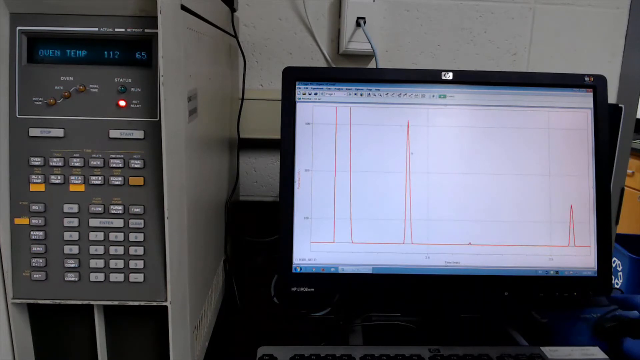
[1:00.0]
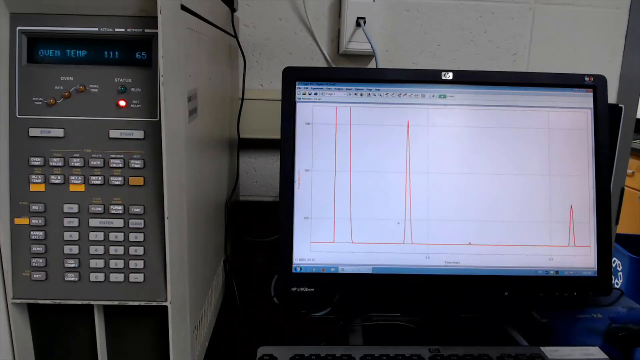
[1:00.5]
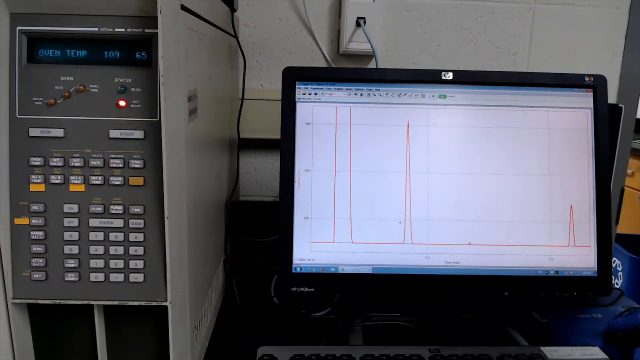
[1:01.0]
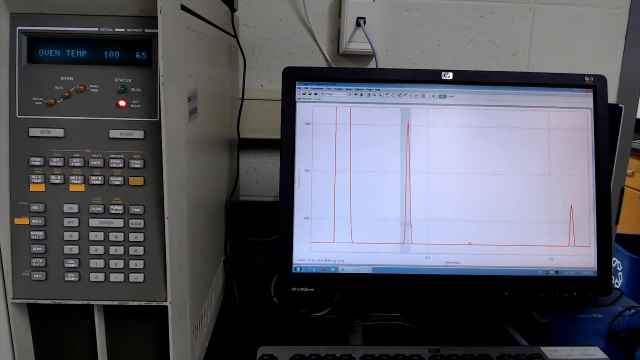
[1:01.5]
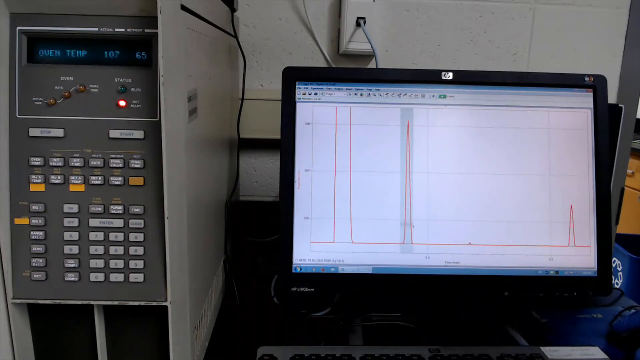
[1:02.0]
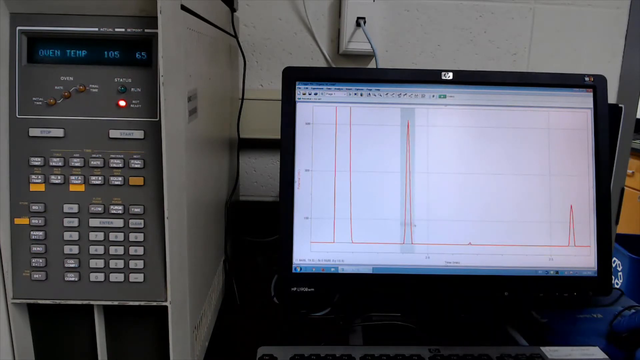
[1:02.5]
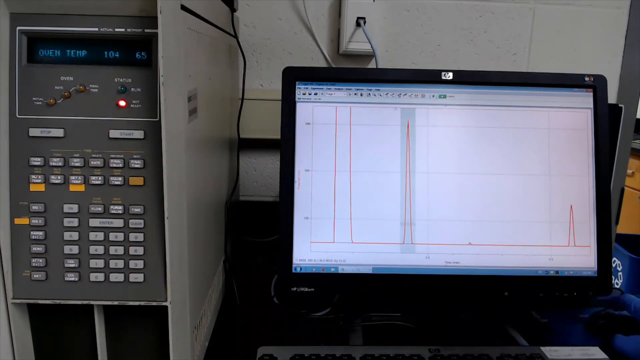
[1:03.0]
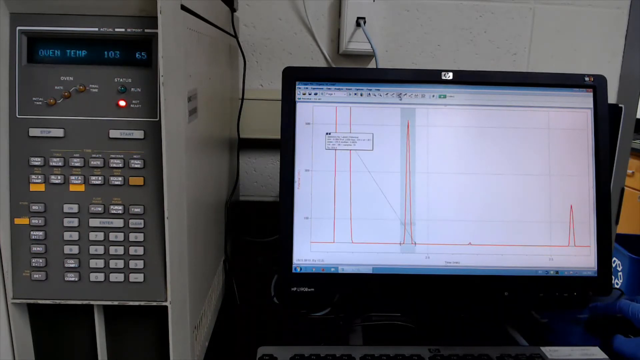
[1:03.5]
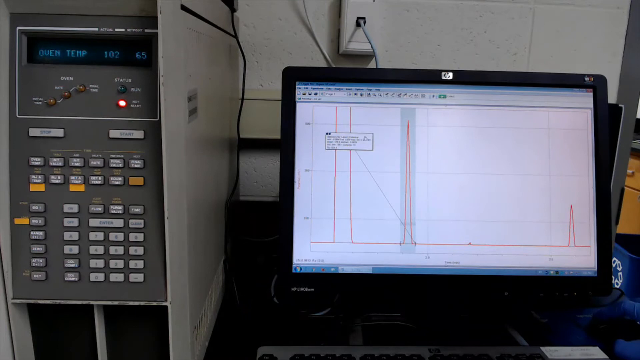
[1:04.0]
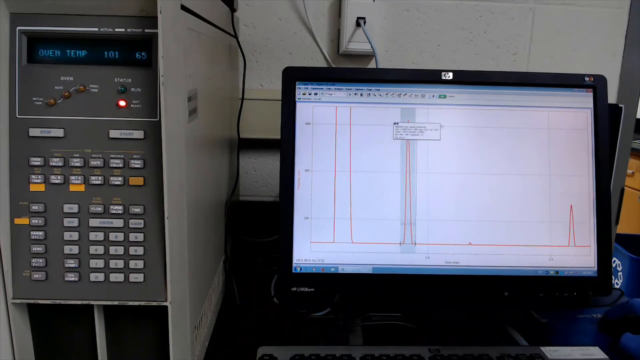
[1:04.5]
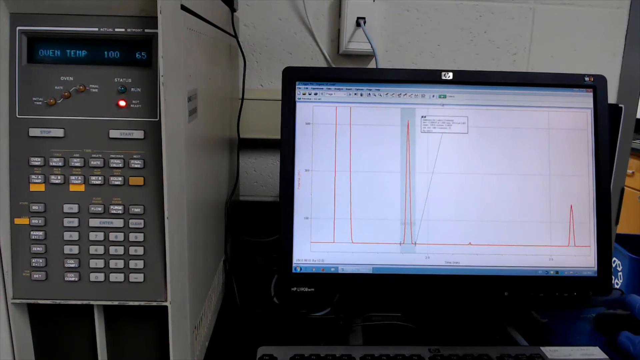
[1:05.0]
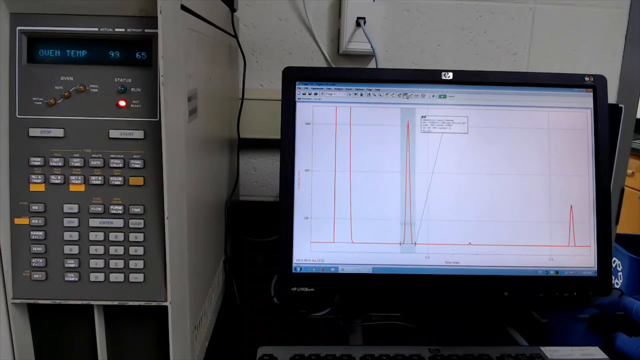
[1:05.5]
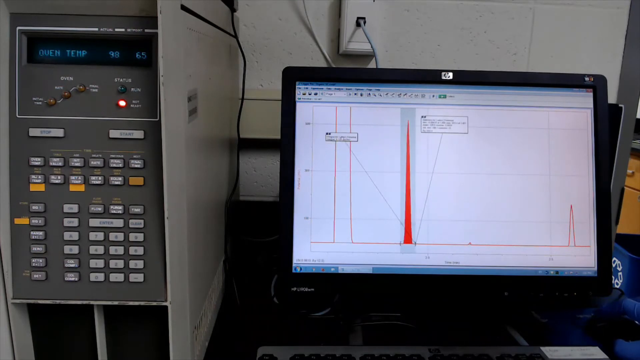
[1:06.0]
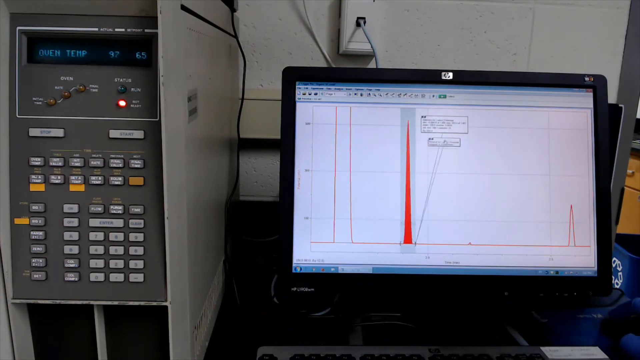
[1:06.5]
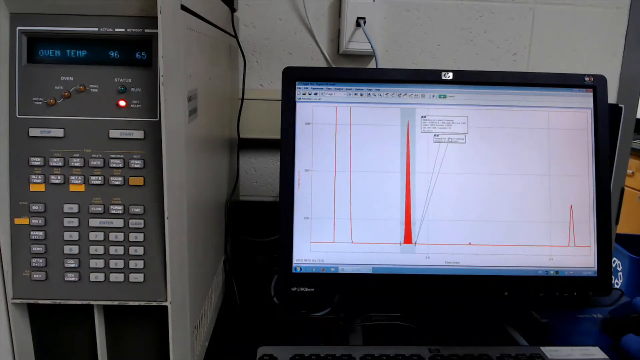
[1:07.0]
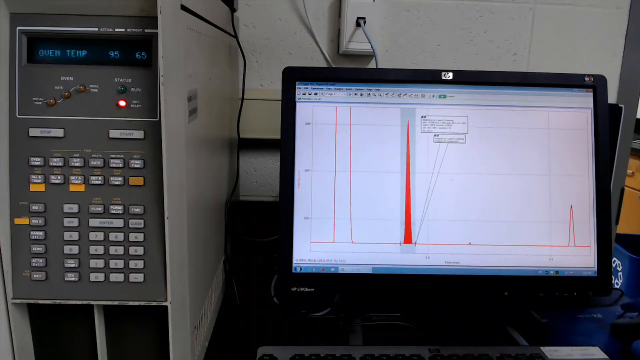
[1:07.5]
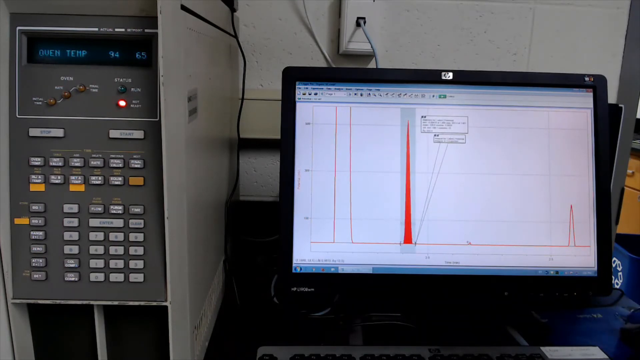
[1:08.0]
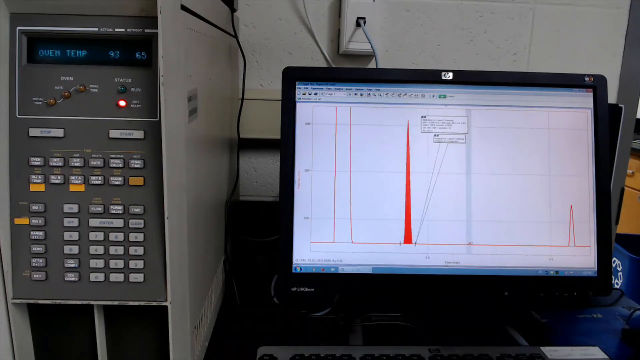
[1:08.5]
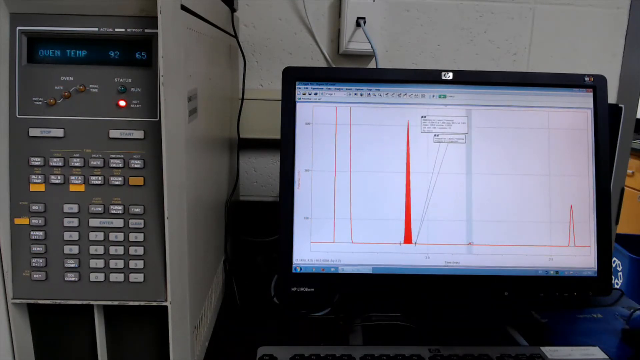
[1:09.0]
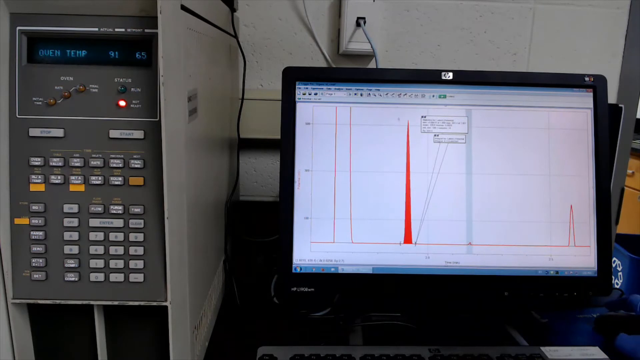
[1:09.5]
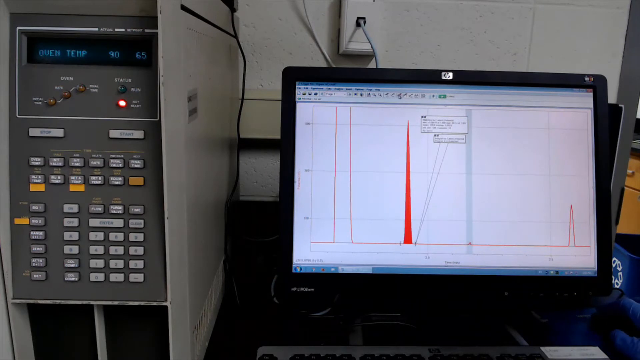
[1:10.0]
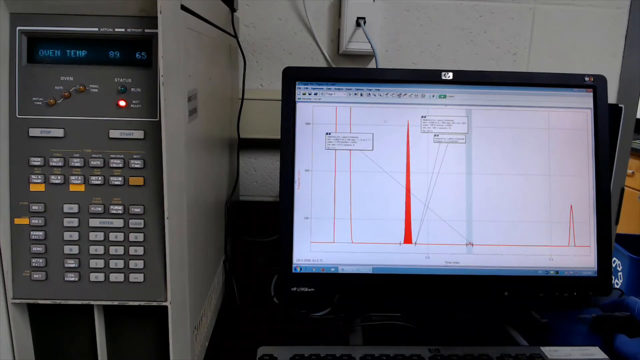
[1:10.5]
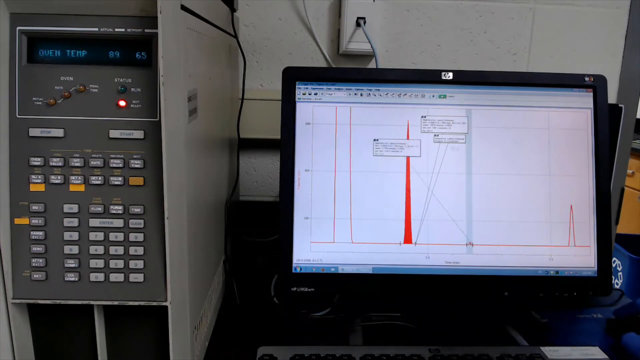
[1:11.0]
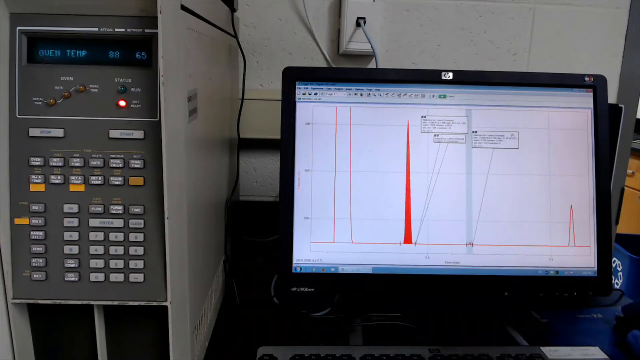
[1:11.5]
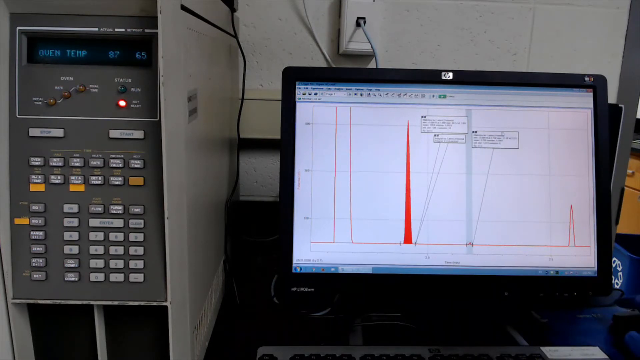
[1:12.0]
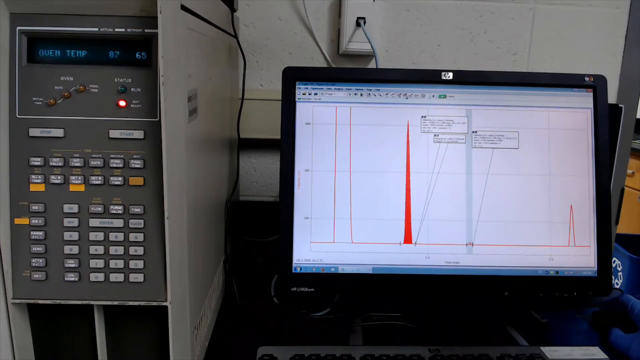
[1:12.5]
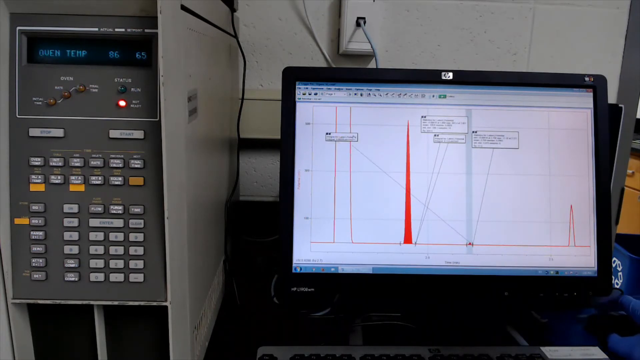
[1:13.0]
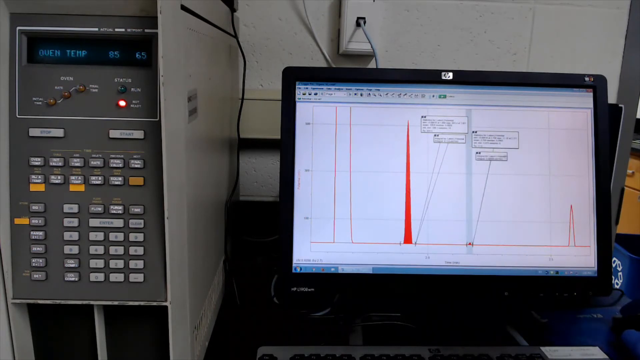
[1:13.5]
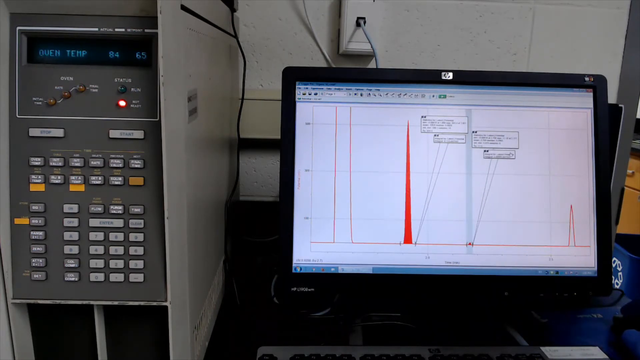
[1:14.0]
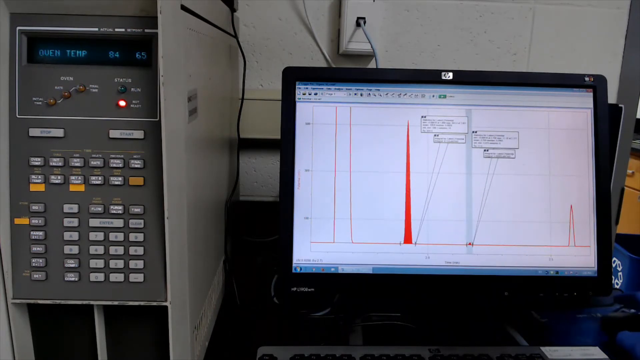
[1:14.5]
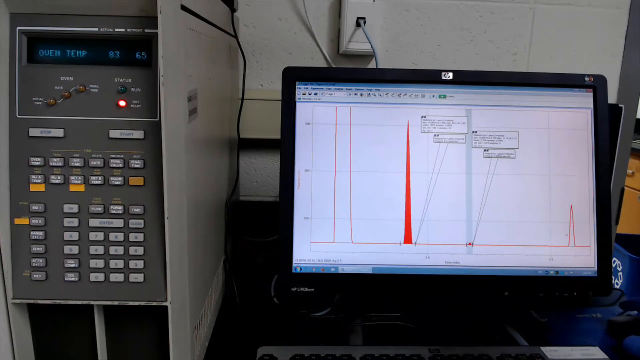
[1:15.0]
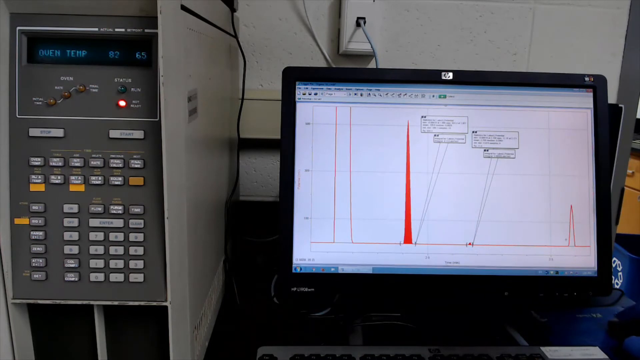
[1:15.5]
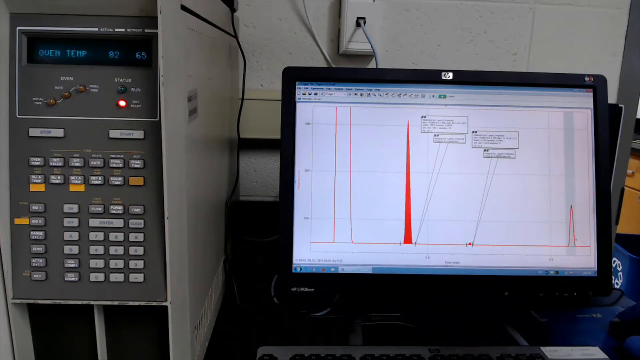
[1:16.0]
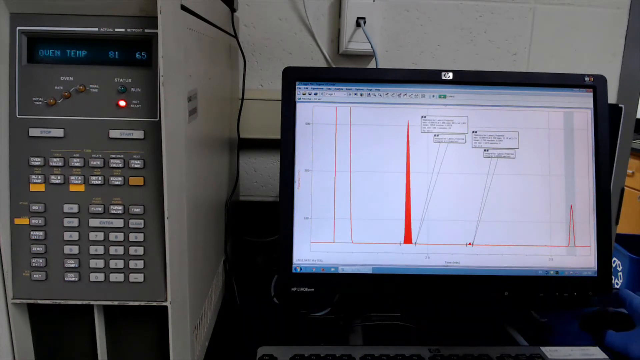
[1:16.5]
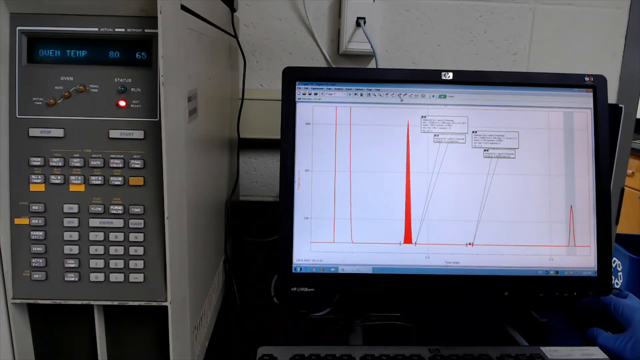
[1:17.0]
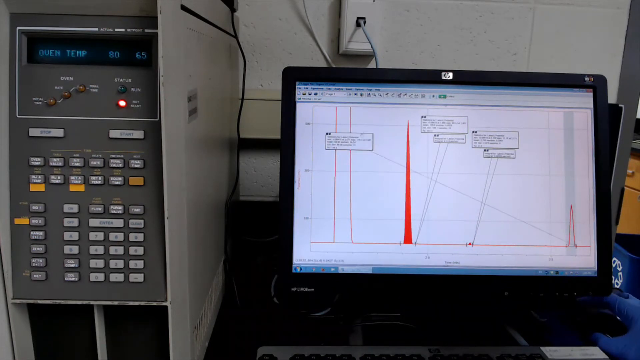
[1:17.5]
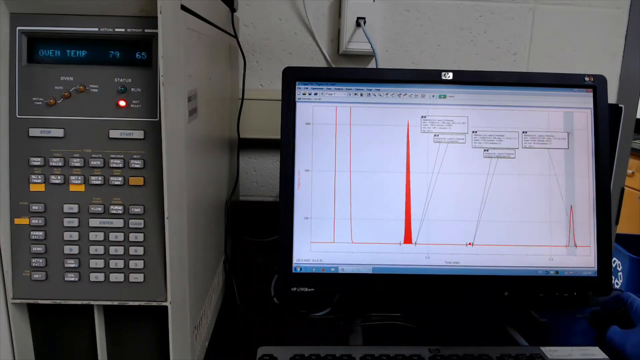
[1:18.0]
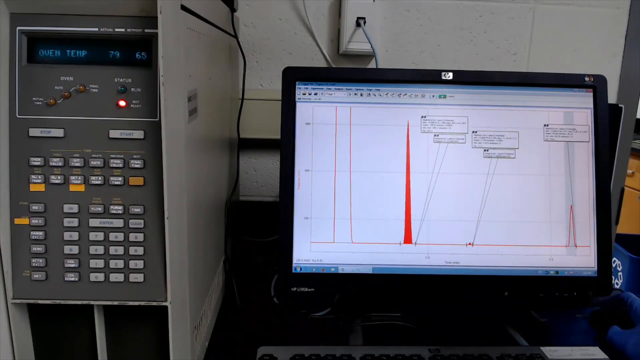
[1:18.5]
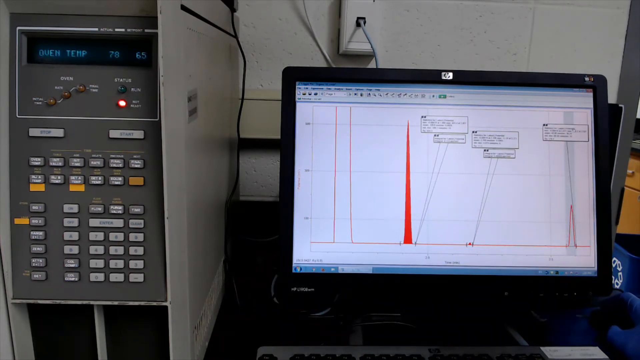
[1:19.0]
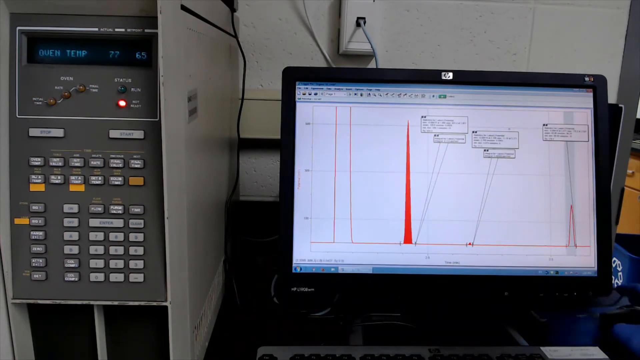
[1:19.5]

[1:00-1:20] The testing machine is on screen along with a laptop used to check the results of the chemicals tested. A hand wearing a blue glove moves, apparently pointing out the results of the tested chemical on the screen.